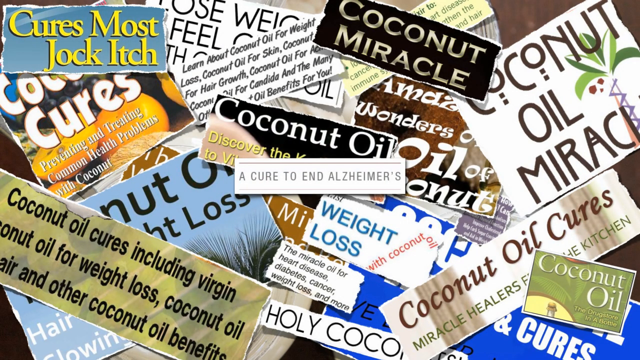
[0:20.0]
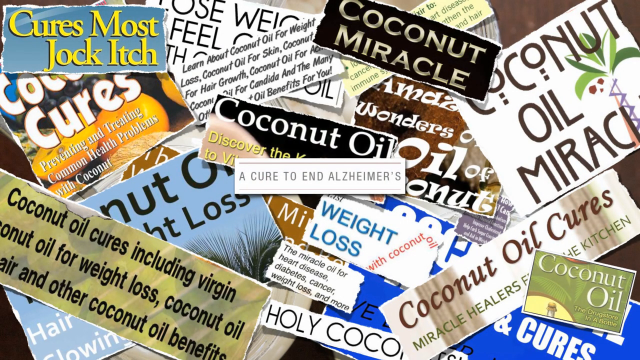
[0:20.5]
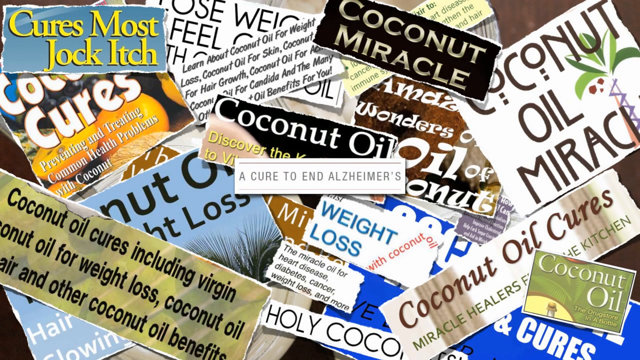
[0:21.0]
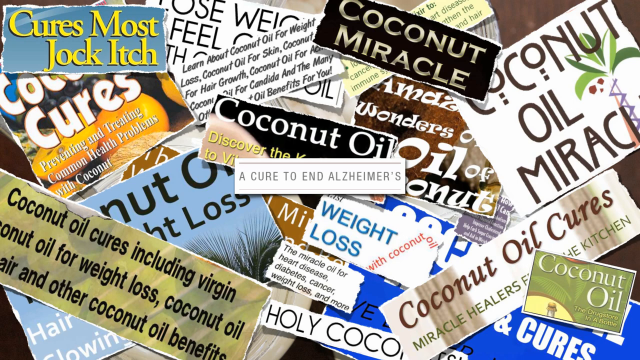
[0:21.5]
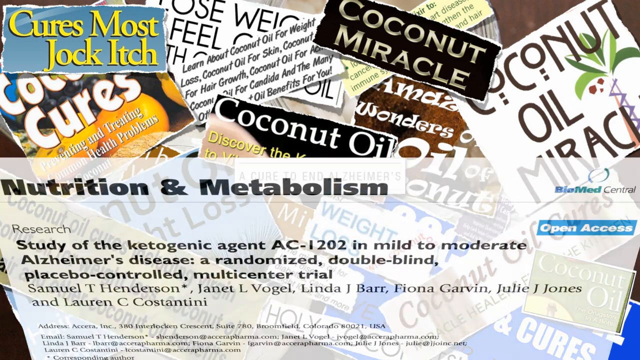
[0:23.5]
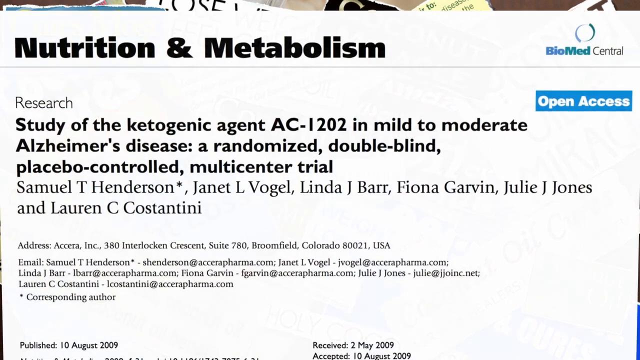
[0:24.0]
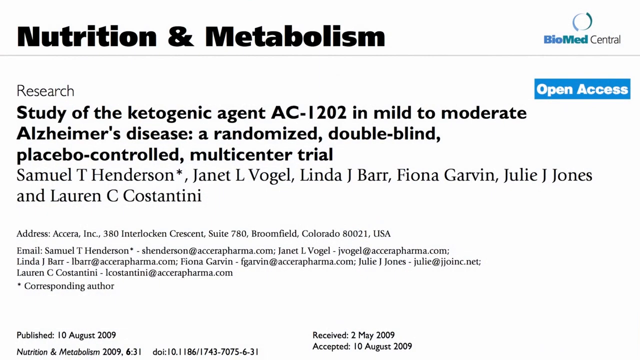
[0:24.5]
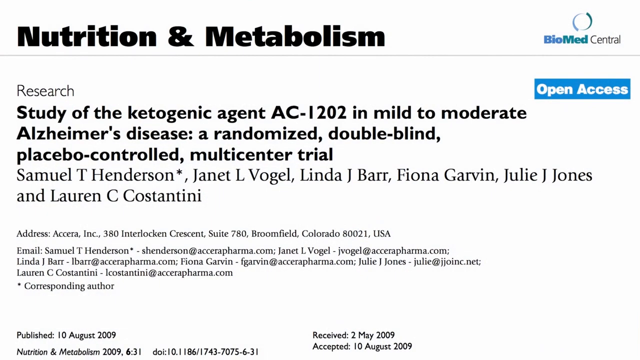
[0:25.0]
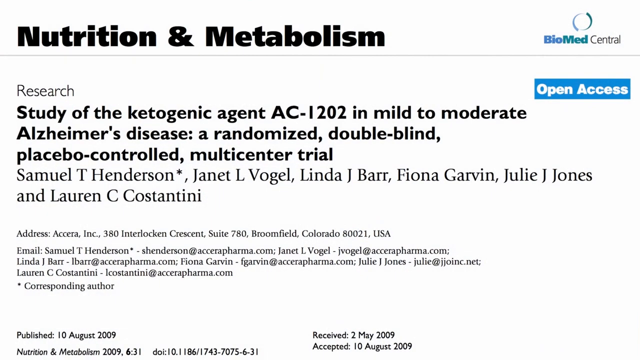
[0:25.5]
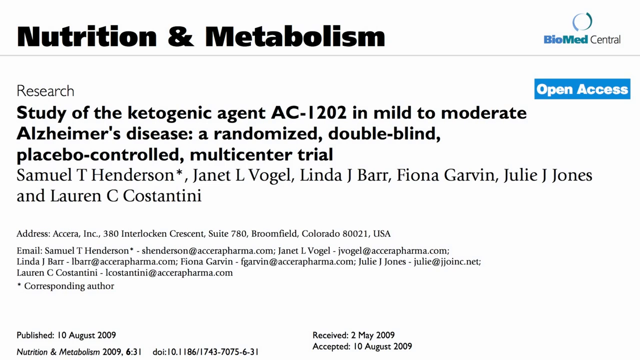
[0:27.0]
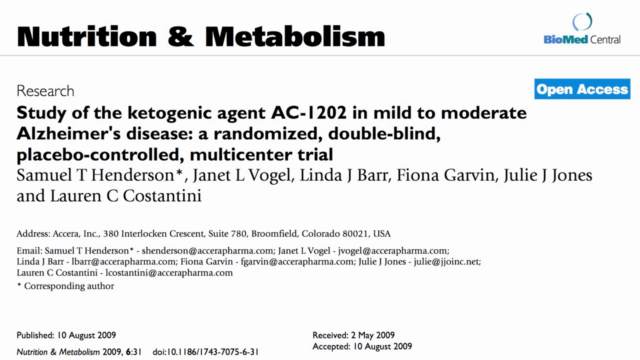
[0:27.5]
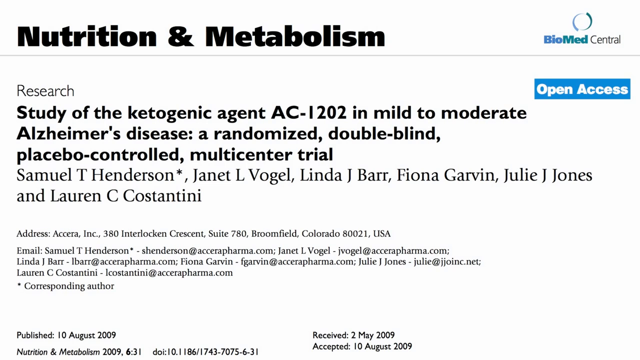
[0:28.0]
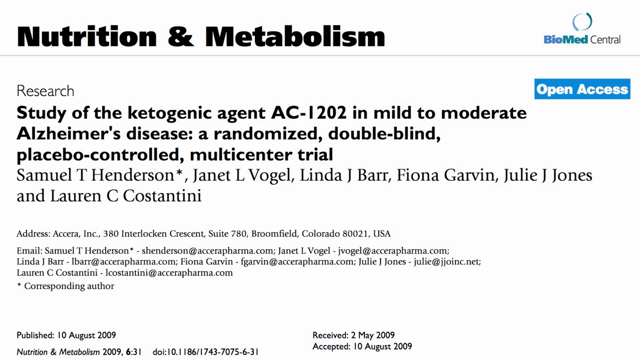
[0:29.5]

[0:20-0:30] A brown table background is covered with around 20 computer-generated cutout pieces of newspaper and magazine, in different fonts and with different images. Each cutout is placed on top of another, creating a kind of collage, and all of them reference coconut oil. A black cutout says "coconut miracle", a small rectangular piece in the middle reads "a cure to end Alzheimer's", and another reads "weight loss". The cutouts are static, and then an article sweeps up from the bottom to cover the image. It has a white background and the kind of format of a research paper. At the top, black bold lettering reads "nutrition", and a biomed central logo is in the top right corner. Underneath is a grey line, then the word "research", and then in bold "study of the ketogenic agent AC 1202 in mild to moderate Alzheimer's disease a randomized double-blind placebo controlled multi-center trial". The paper lists all of the researchers involved, followed by the address and email addresses of the authors. At the very bottom is the text "published 10th of August 2009", and in the middle at the bottom "received 2nd of May 2009". A blue text box in the top right corner, underneath the biomed central logo, reads "open access" in white.